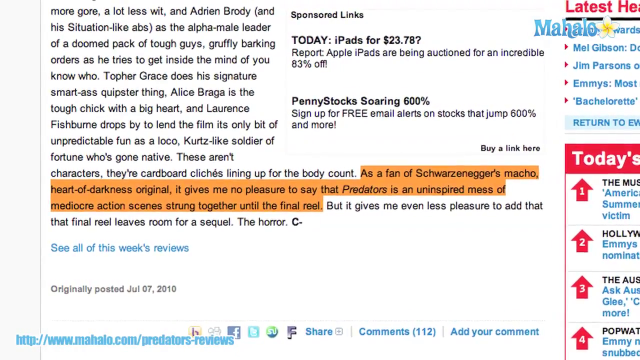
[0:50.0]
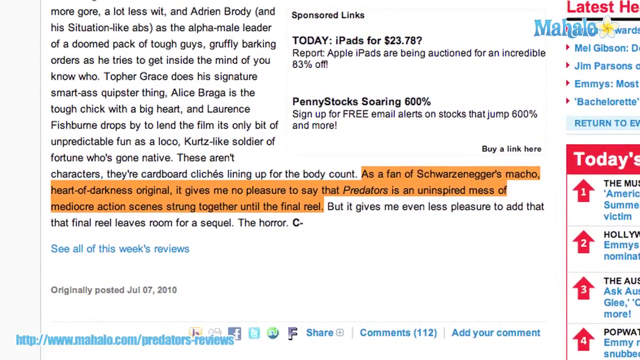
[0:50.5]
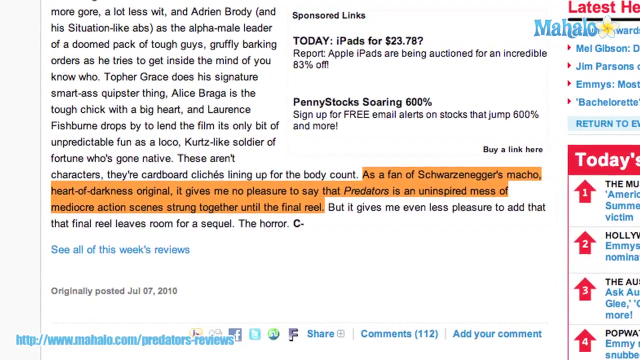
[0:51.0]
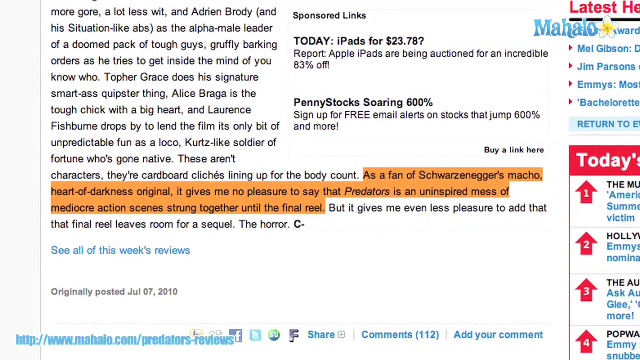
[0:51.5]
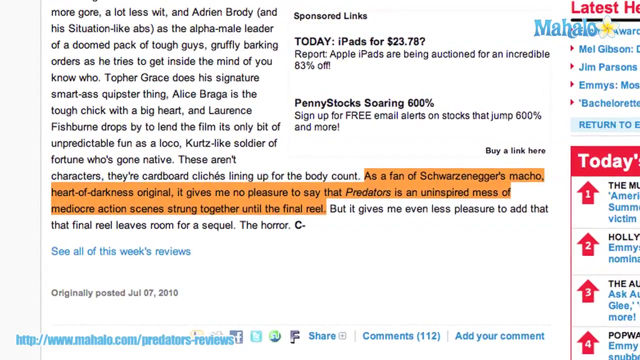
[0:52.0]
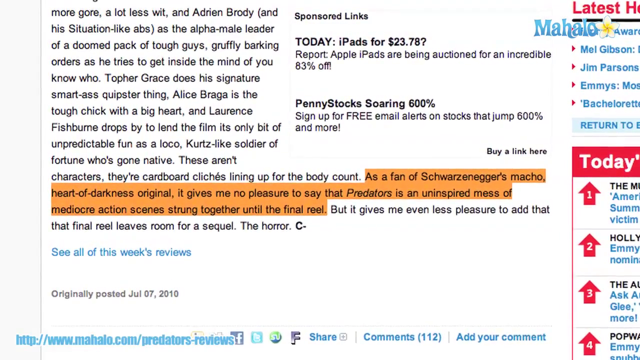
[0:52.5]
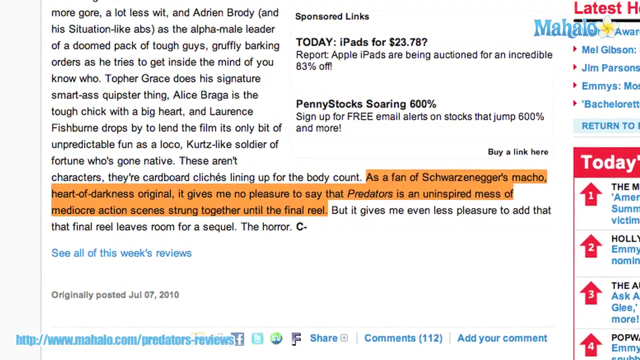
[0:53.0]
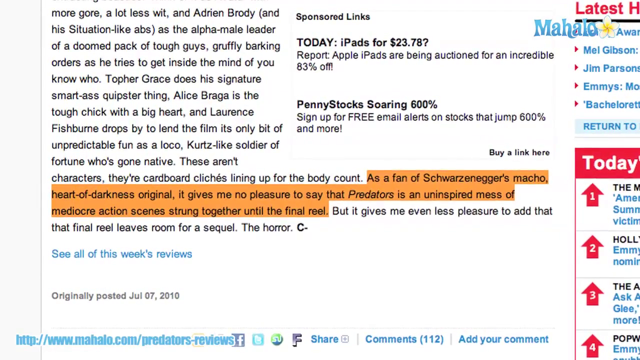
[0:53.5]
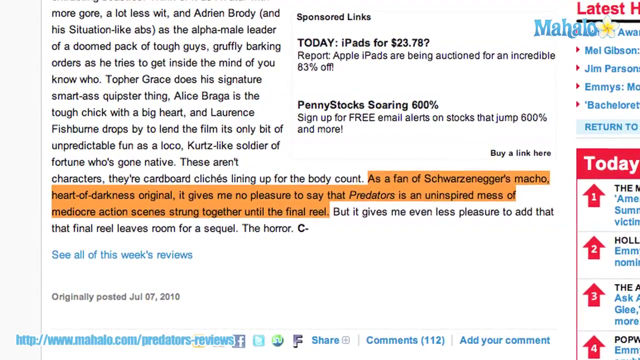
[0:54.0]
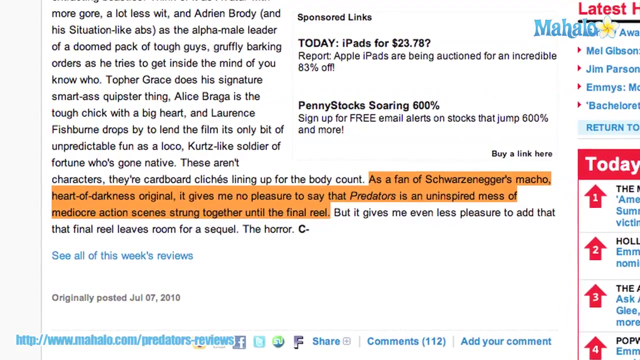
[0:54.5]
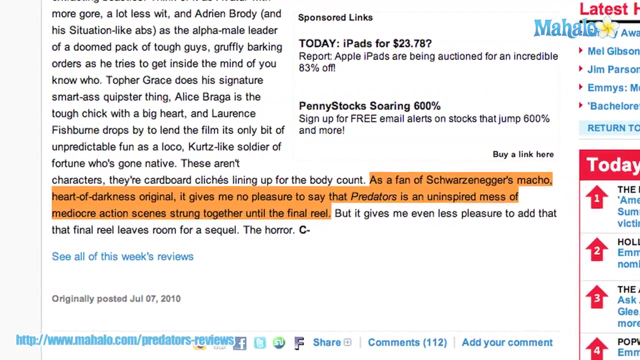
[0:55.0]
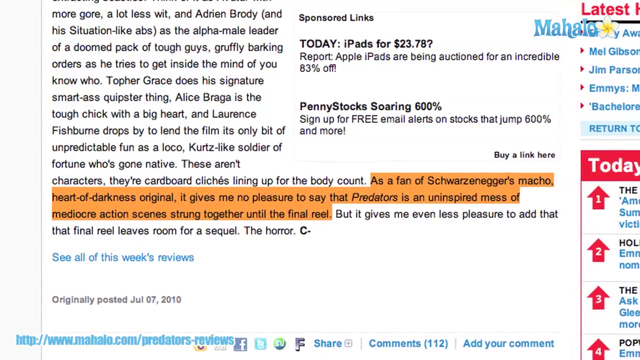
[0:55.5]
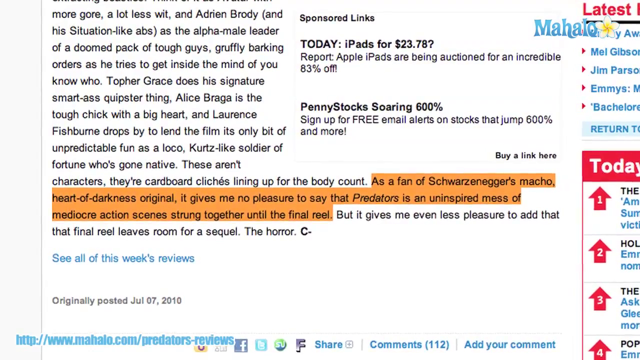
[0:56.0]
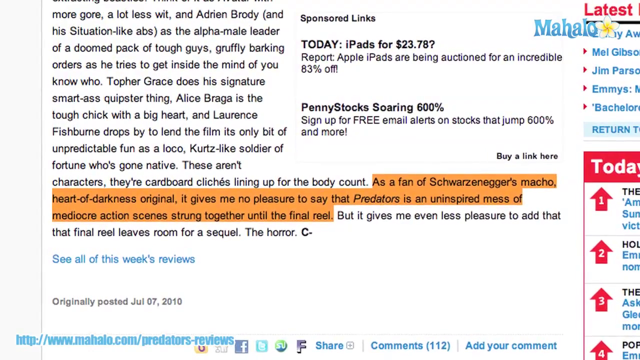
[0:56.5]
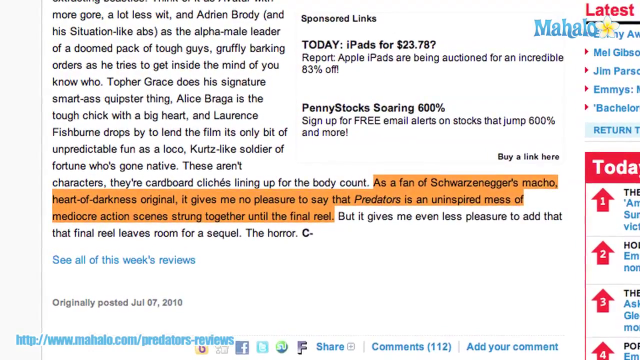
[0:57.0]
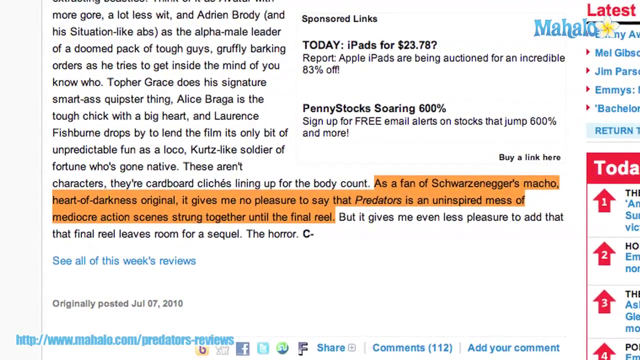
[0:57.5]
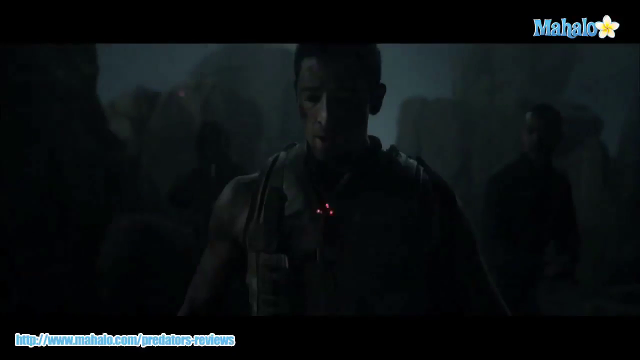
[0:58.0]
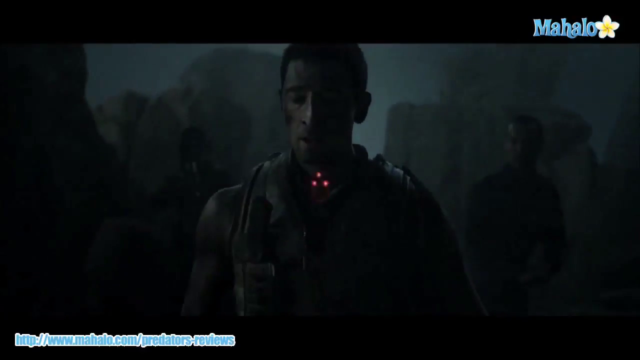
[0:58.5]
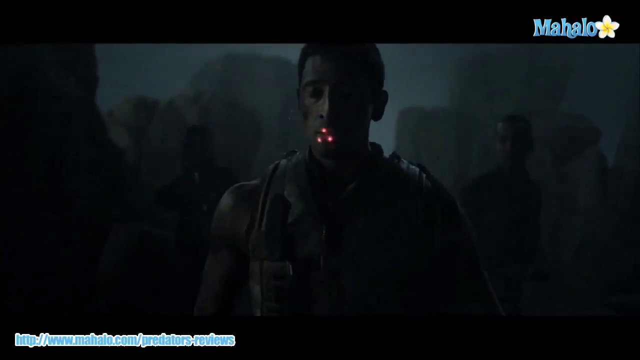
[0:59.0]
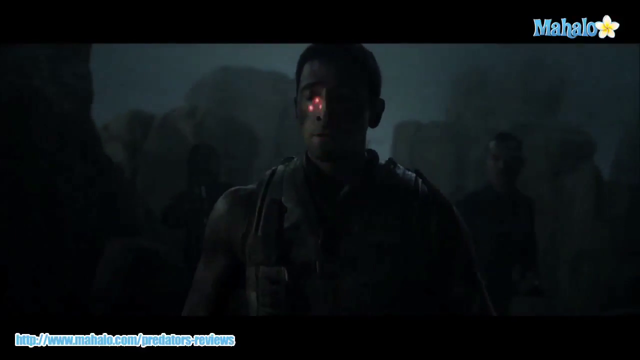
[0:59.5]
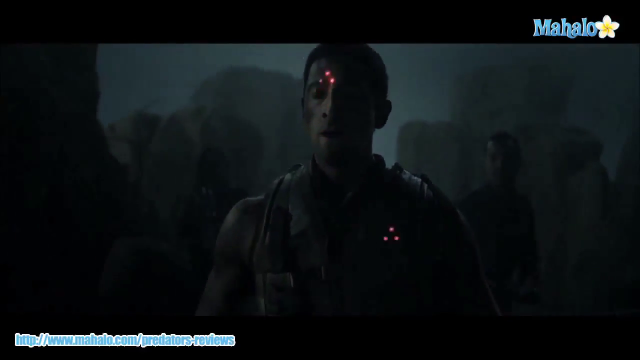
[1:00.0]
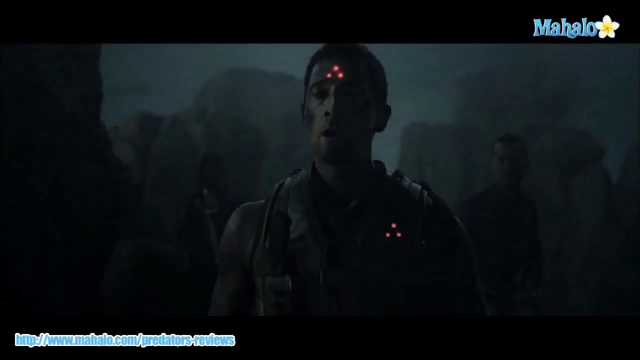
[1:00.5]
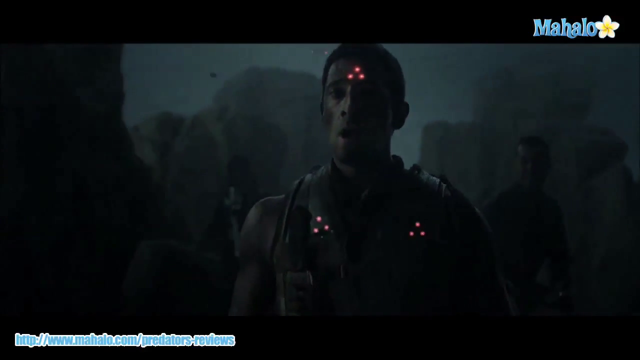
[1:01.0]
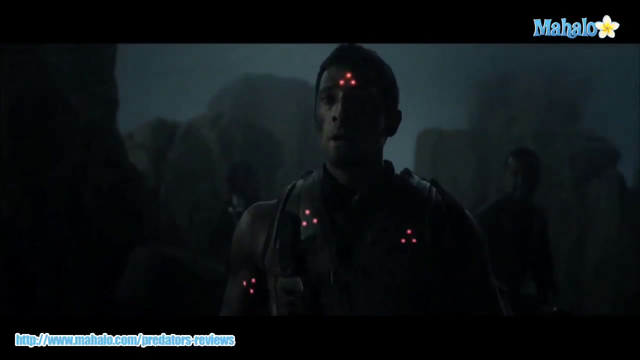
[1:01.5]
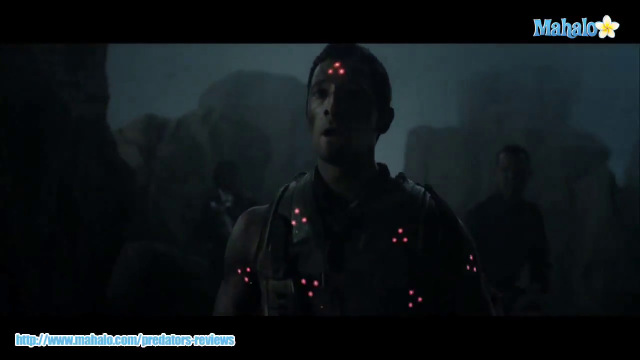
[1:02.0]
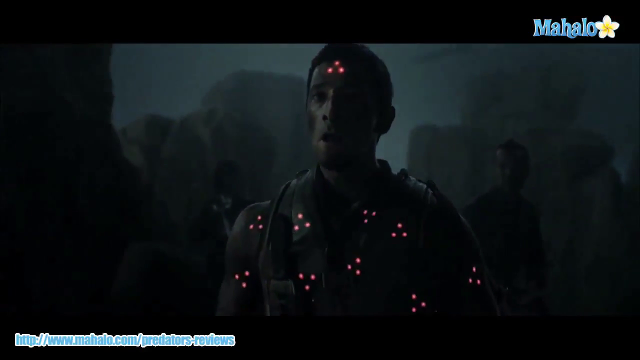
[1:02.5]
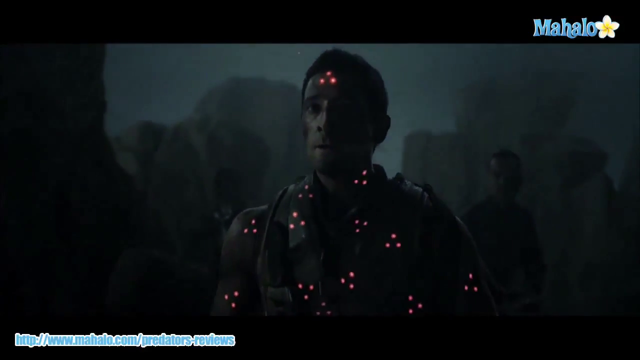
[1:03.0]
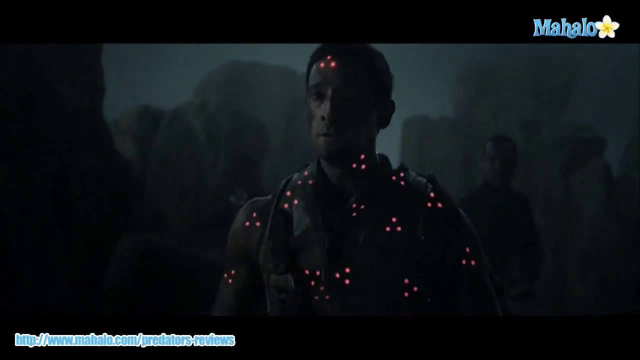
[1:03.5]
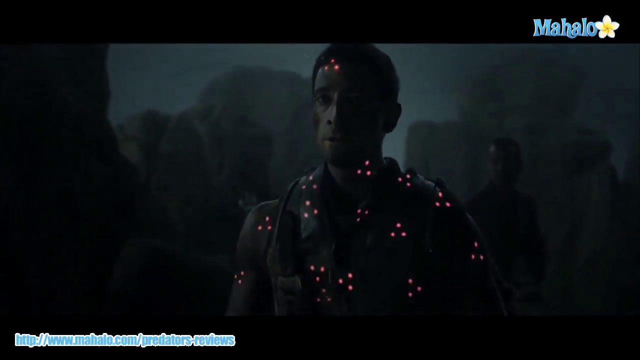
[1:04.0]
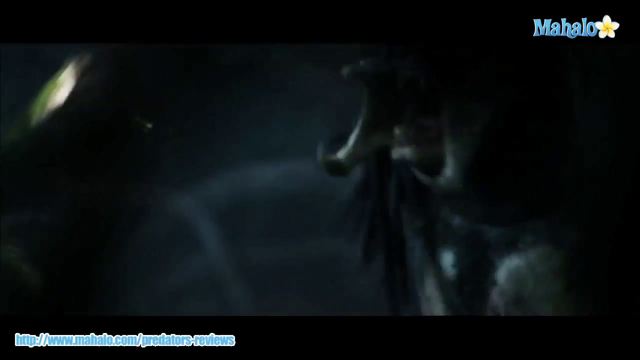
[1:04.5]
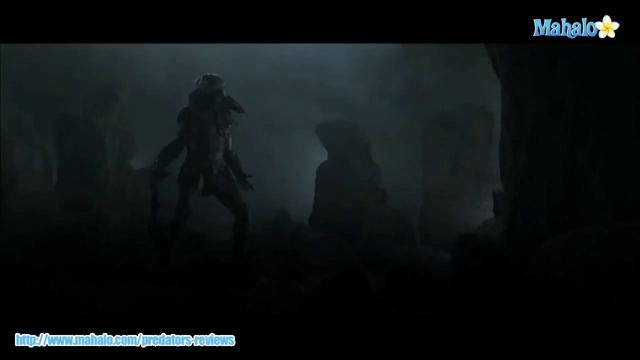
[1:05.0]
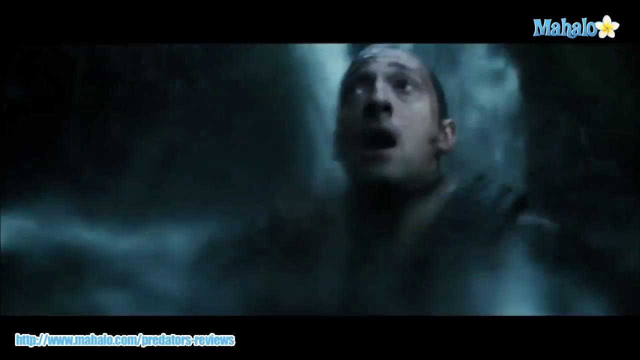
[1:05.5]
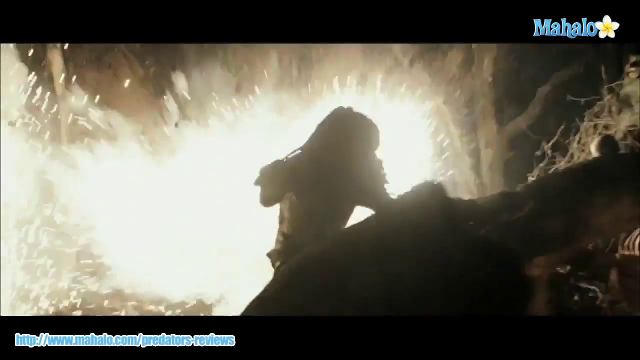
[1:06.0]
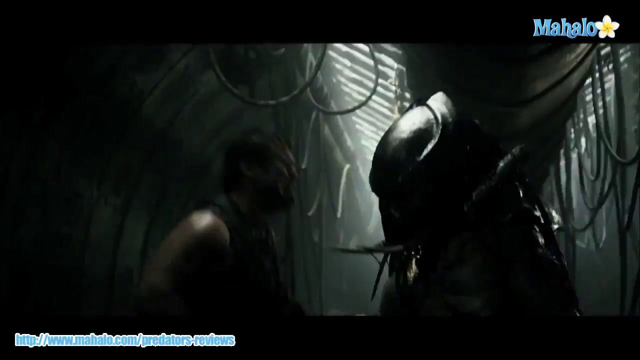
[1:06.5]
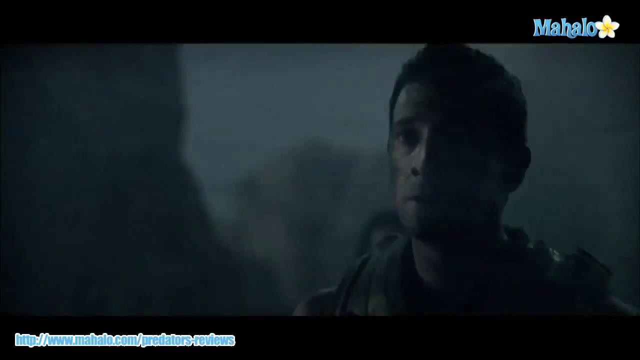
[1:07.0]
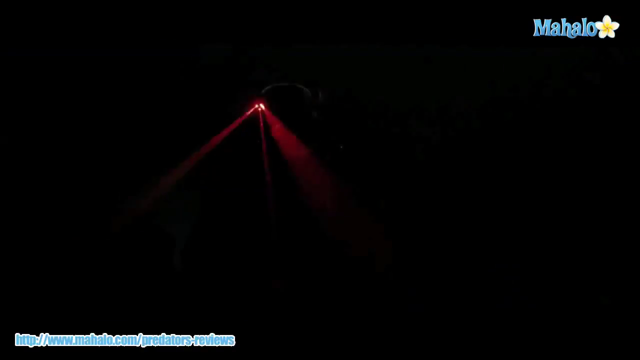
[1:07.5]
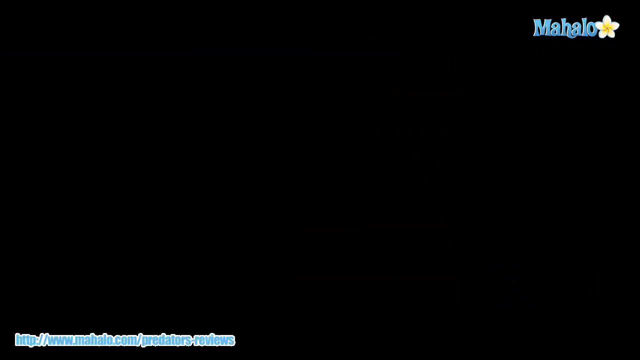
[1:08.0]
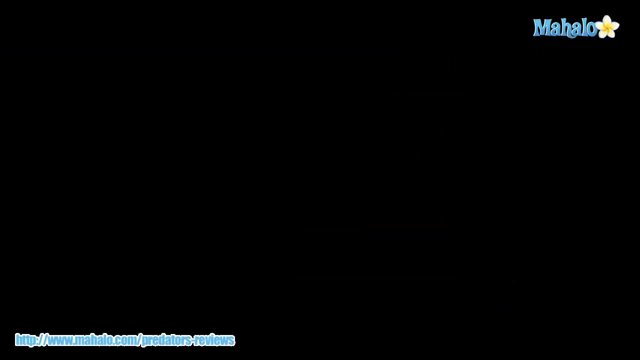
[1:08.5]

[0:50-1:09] A part of the review text is highlighted, reading "Predator is an inspired mess of mediocre action scenes strung together until the final reel." A clip from the movie follows: a man stands with a couple of other people behind him. He stands still as three dots appear on his head, then about a dozen of those three-pointed dots appear on him while he stays still. An alien-type creature appears, with fangs instead of a mouth. The main character jumps into the water, an alien jumps behind something, and two aliens fight each other. A man is picked up by an alien that has a fang coming out of its helmet. Finally, the guys escape toward some red lights.